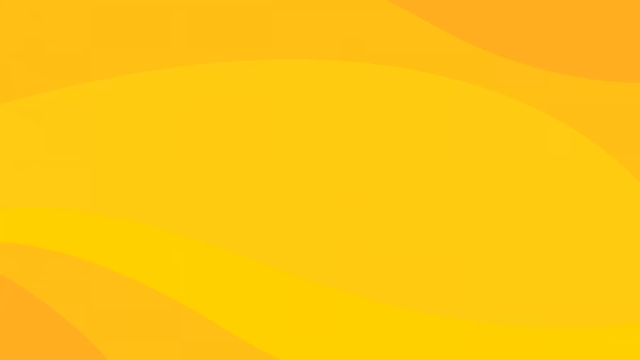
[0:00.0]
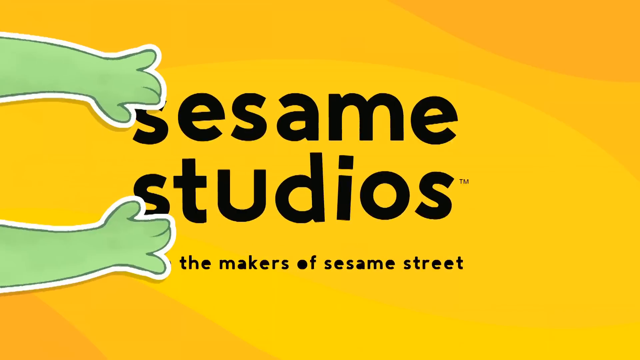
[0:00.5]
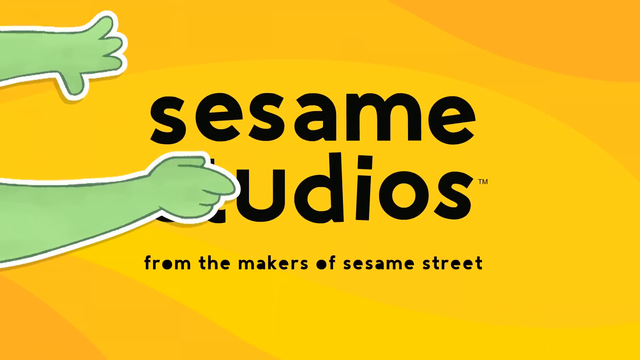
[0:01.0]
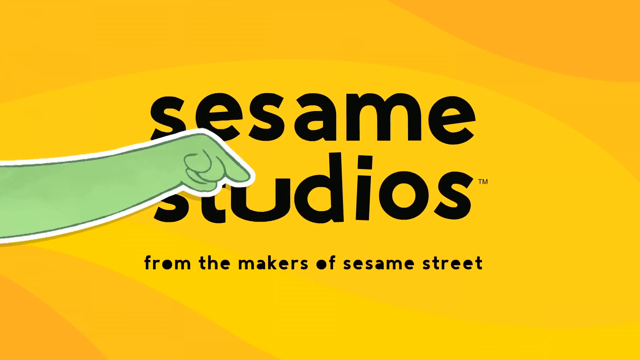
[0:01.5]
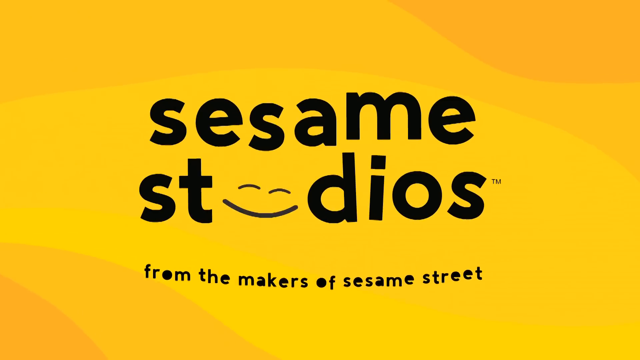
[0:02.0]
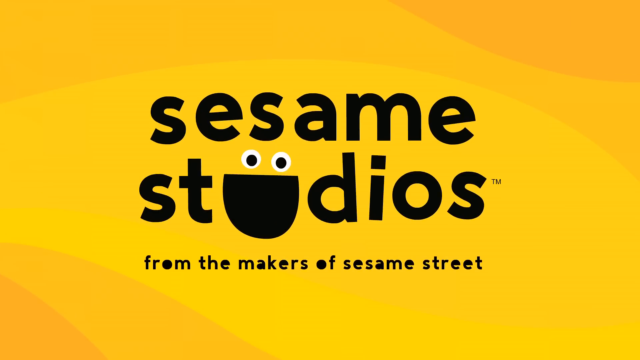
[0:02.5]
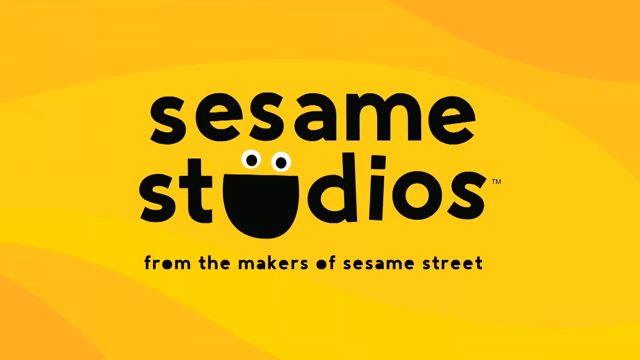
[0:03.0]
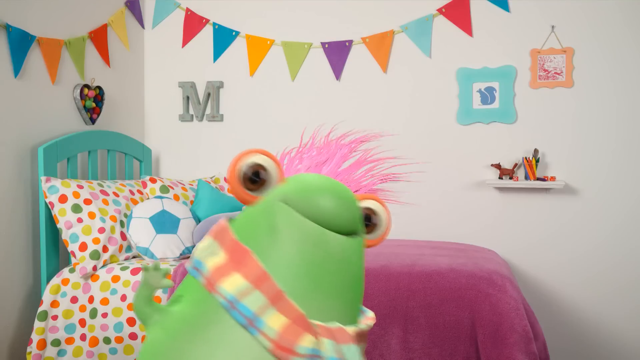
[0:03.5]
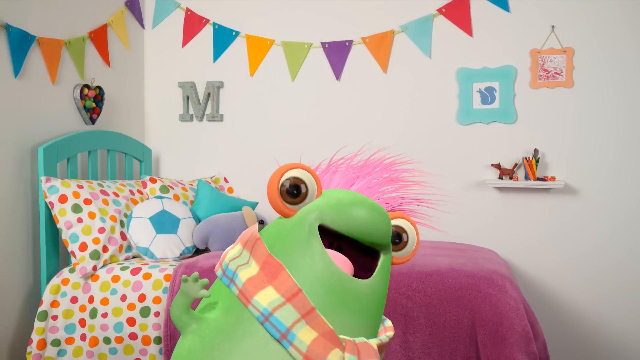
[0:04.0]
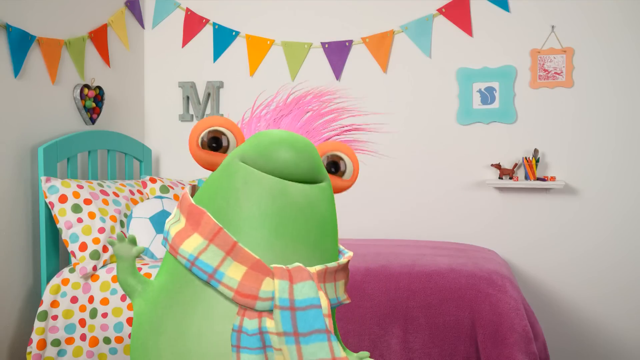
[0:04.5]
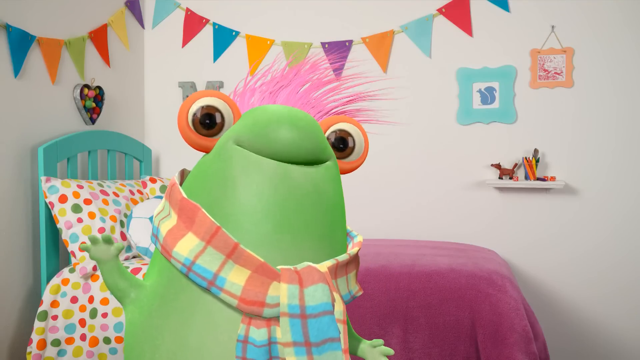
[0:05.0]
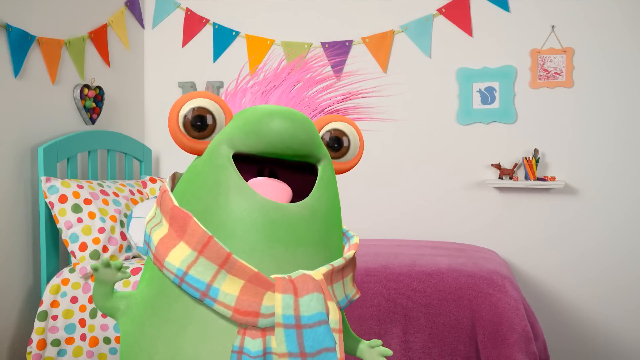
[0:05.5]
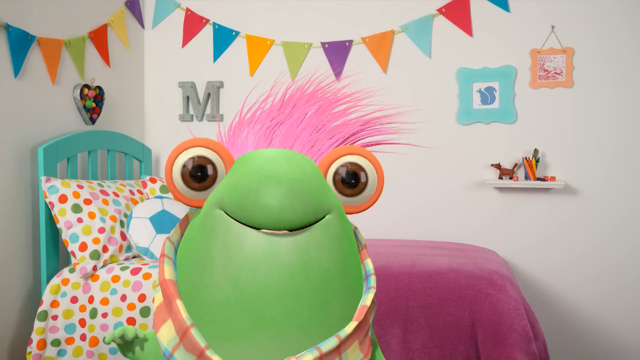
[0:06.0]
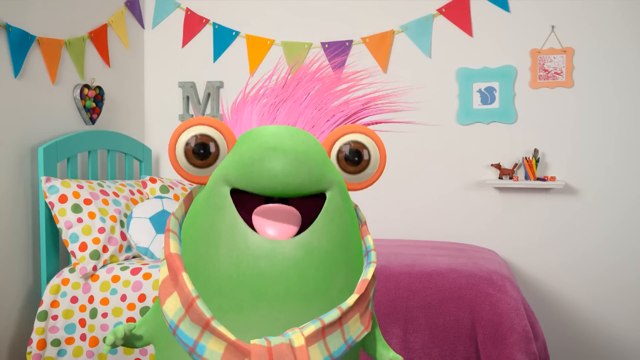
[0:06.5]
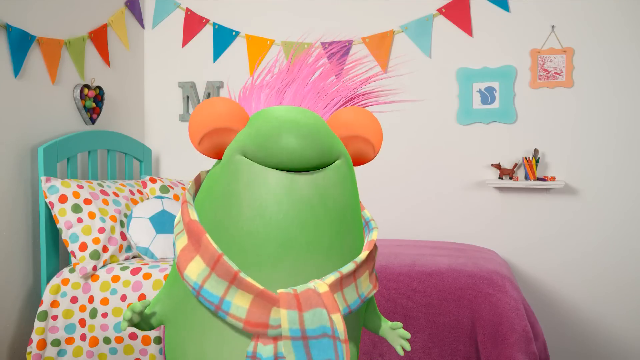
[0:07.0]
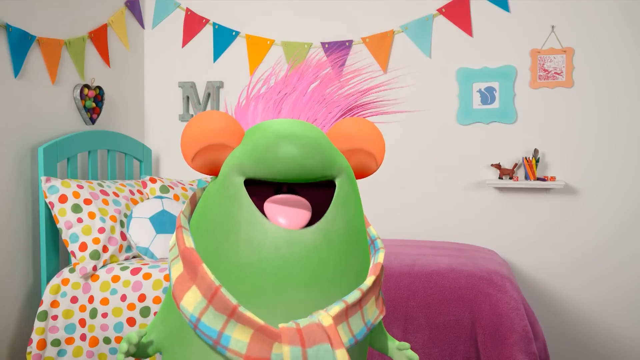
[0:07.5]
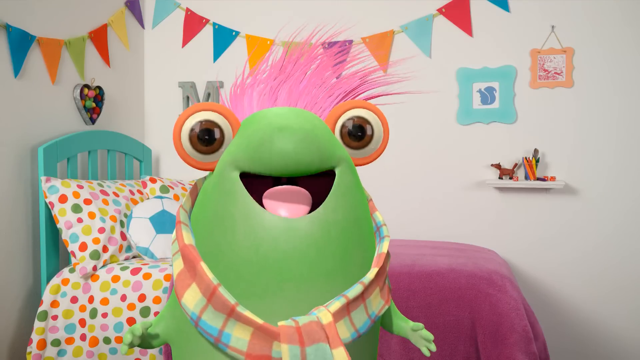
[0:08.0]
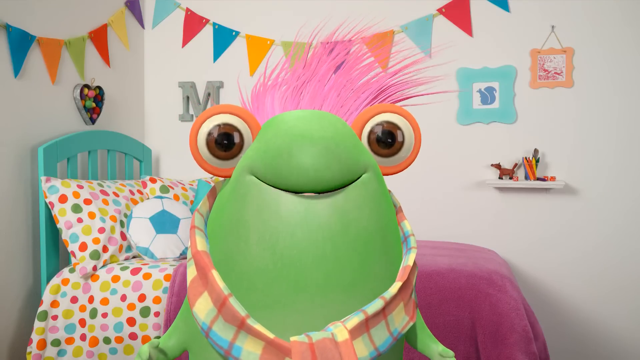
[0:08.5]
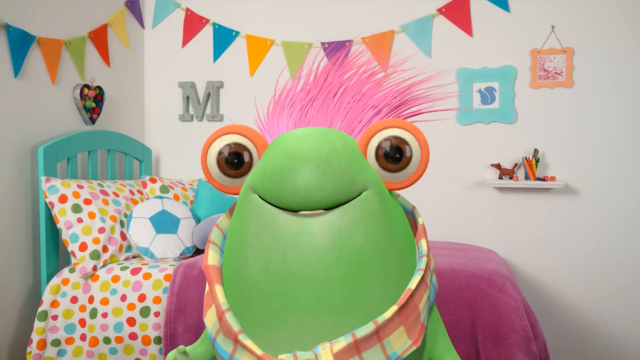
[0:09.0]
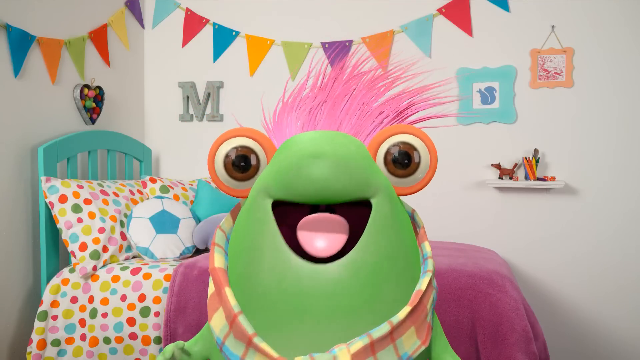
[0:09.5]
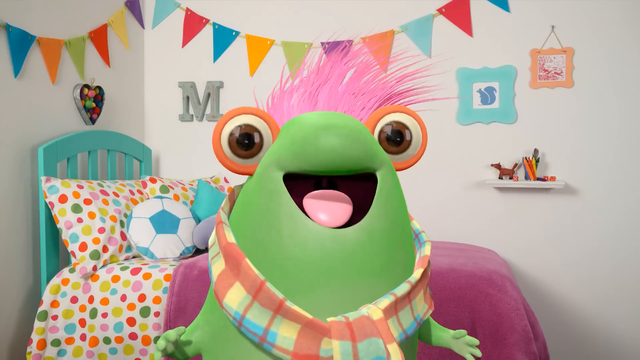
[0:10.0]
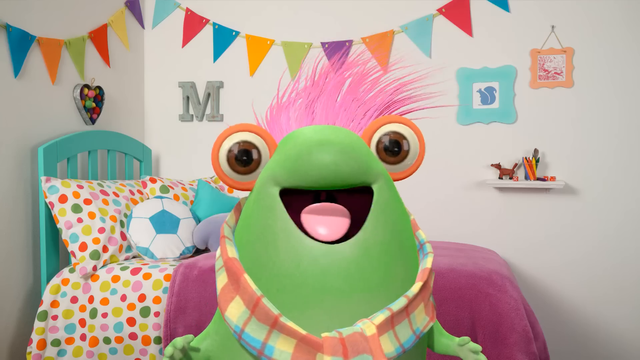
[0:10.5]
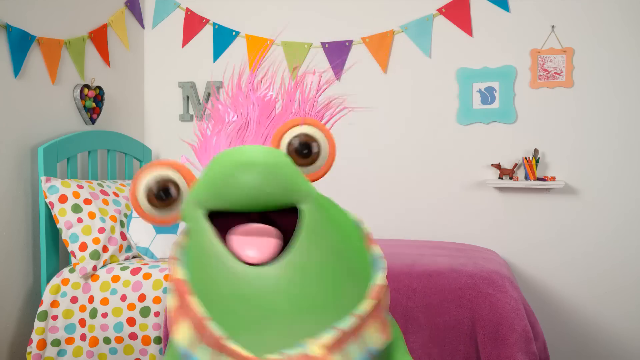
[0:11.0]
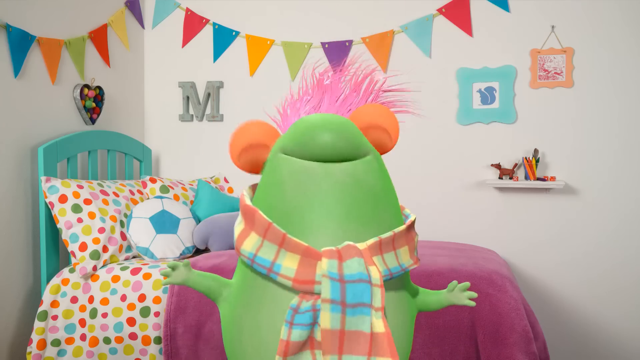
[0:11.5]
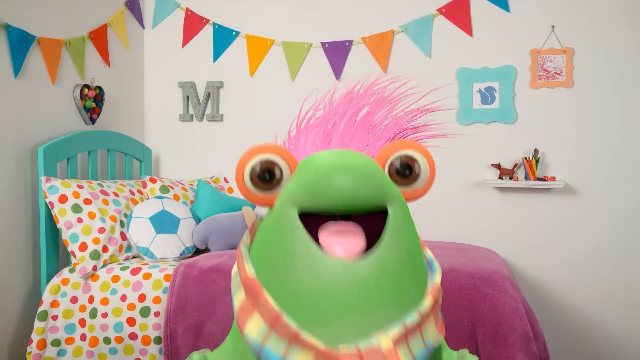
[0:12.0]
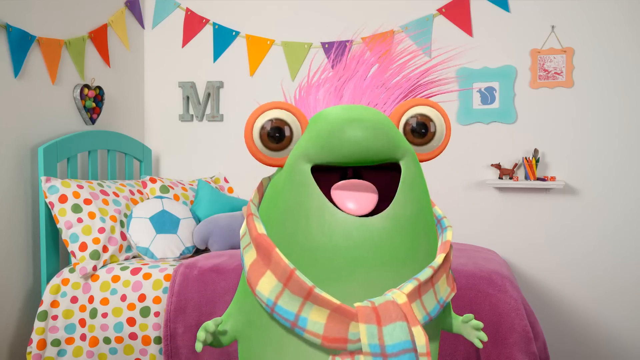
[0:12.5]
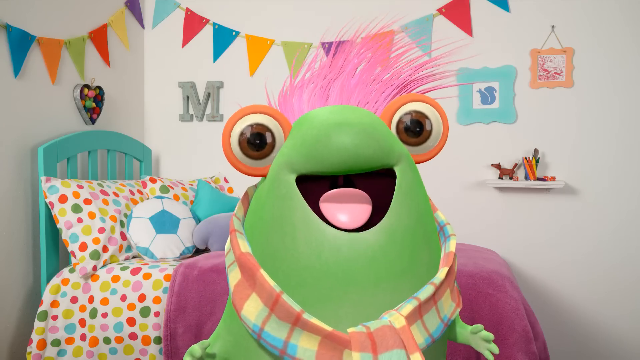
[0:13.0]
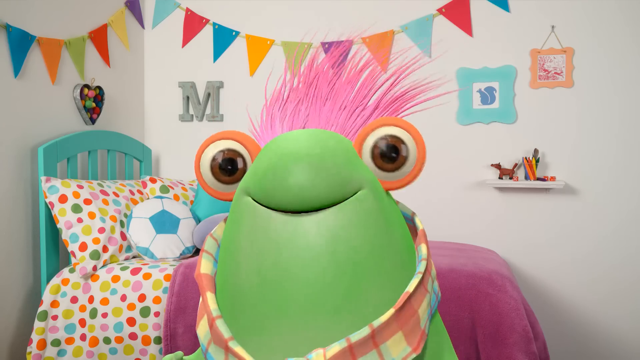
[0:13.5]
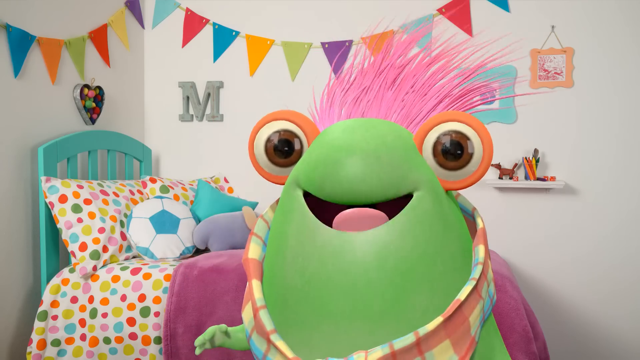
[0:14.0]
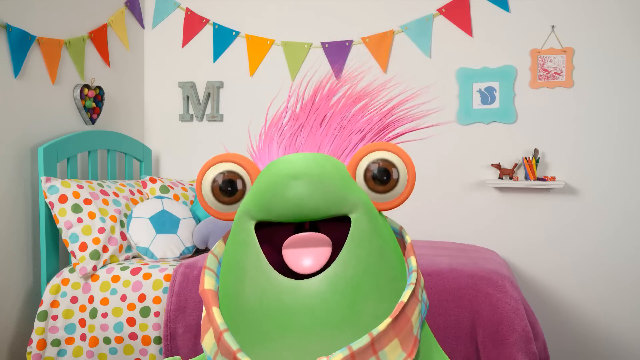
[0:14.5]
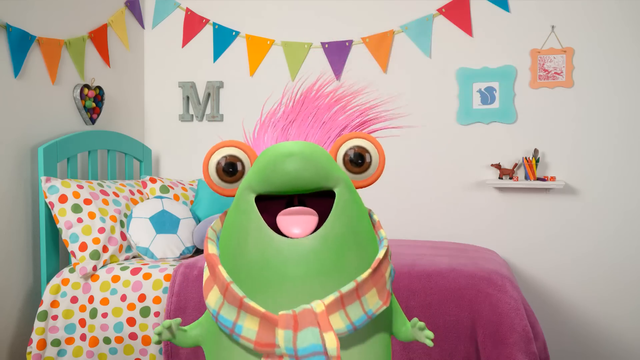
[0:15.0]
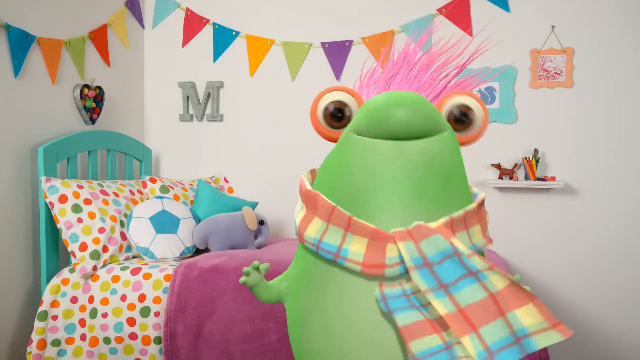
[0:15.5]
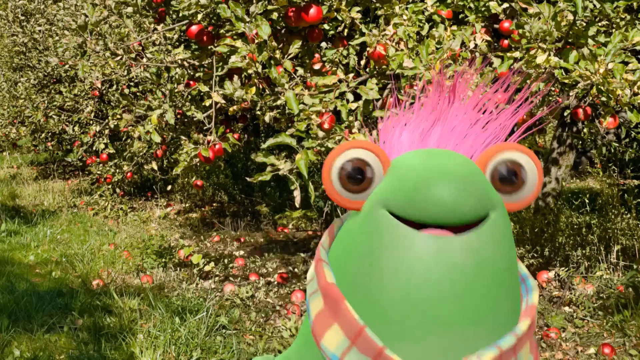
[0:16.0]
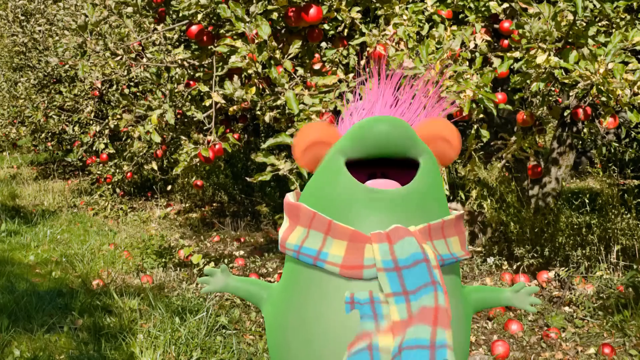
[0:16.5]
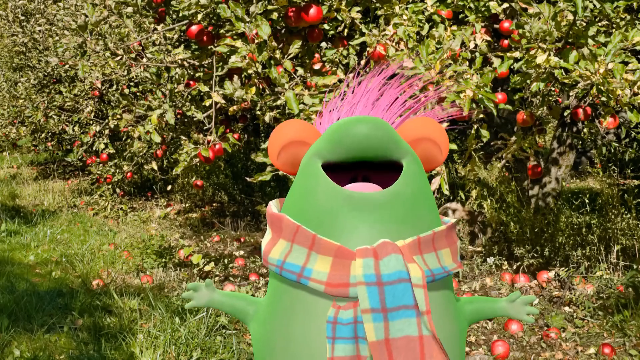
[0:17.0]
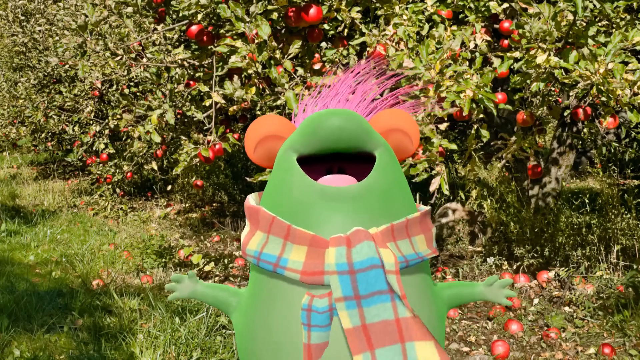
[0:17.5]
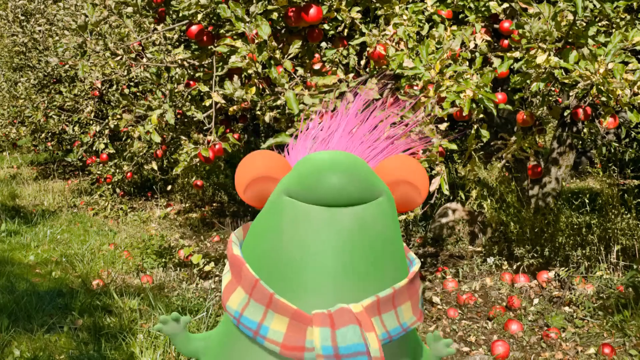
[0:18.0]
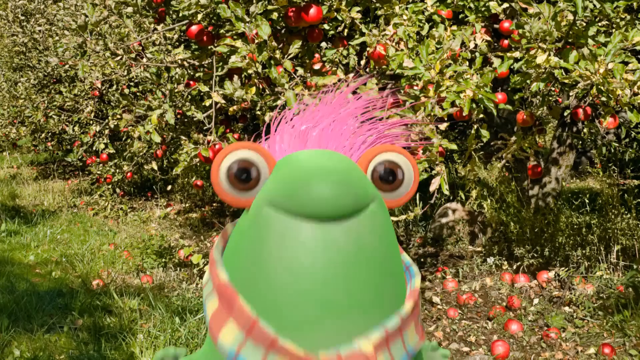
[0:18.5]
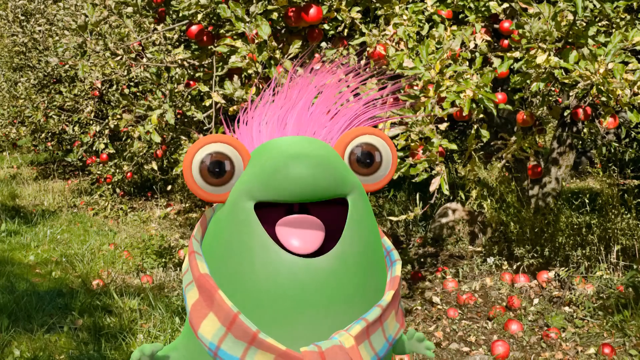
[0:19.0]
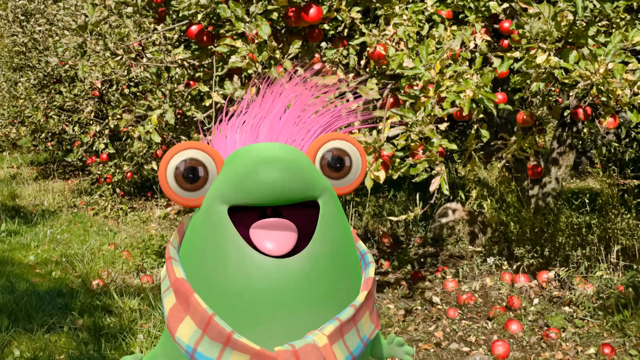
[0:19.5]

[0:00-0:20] Text moves to the right of the screen along with two long green arms that have a white outline. The text reads "Sesame Studios, the makers of Sesame Street," and the green character seems to point toward the Sesame Studios text, whose font changes with a smiley-face design that goes into it. The video then moves to what looks like a live-action but animated scene. A green character with orange round eyes and pink fluffy hair wears a plaid, slightly cut-off outfit. In the background are a teal bed frame, white and multicolored polka-dot sheets, a pink blanket, a white and blue soccer ball pillow, another teal pillow, a grey M on the wall, and some other decor. The character waves toward the camera as if talking to it, his mouth slightly open showing a pink tongue. He looks very happy, and when he blinks it is a very tight blink. He has a large set of brown eyes and keeps talking while moving his body around in excitement, staying in one position for most of the scene. The scene then changes to a bunch of bushes outside that have what look to be oranges on them.